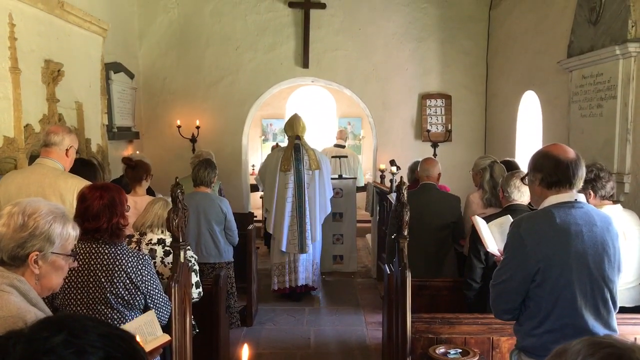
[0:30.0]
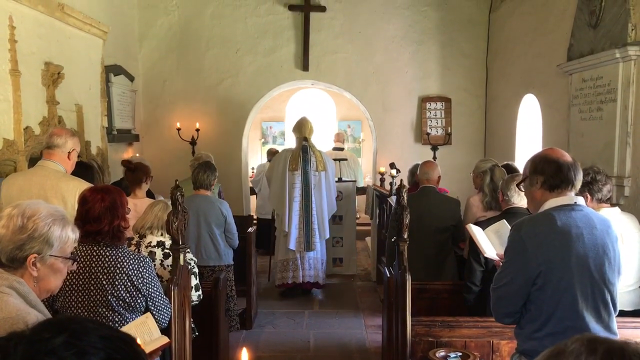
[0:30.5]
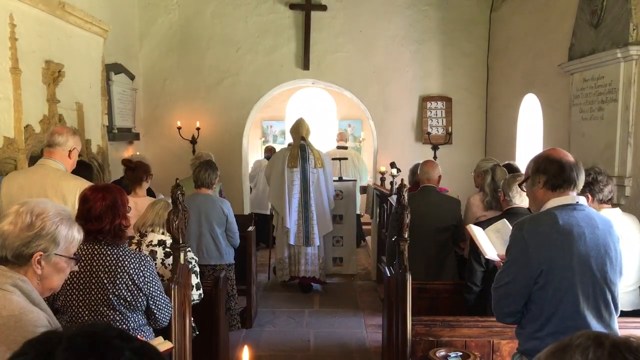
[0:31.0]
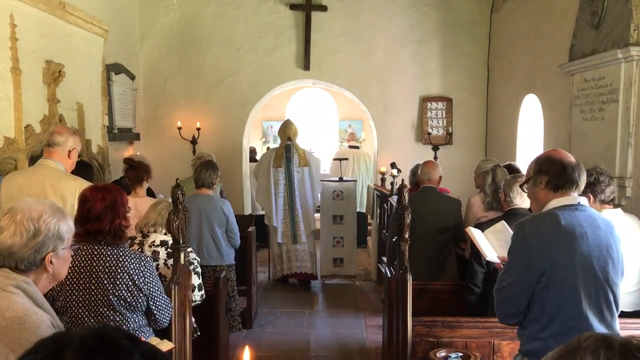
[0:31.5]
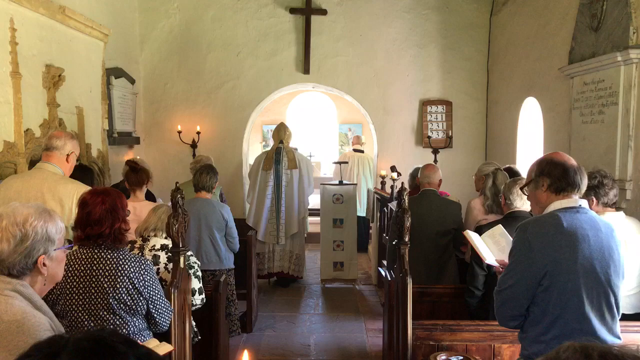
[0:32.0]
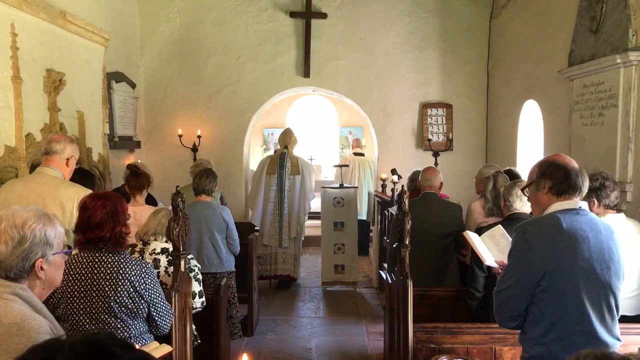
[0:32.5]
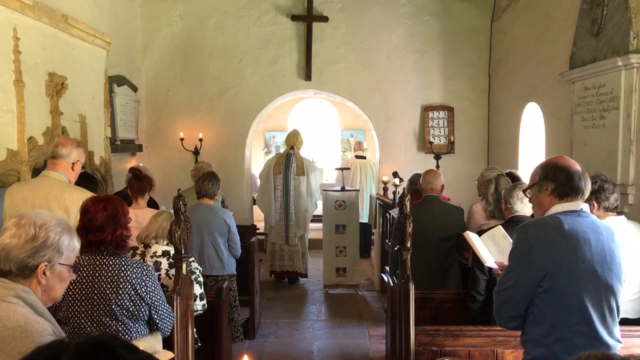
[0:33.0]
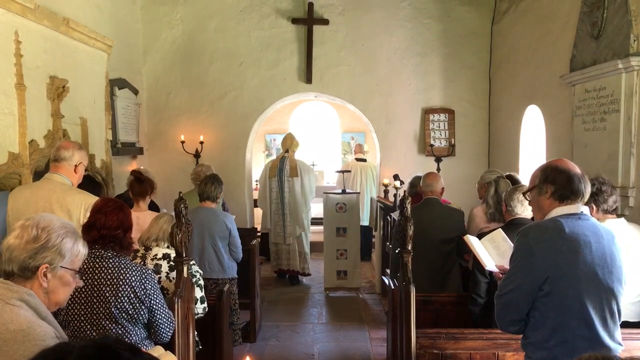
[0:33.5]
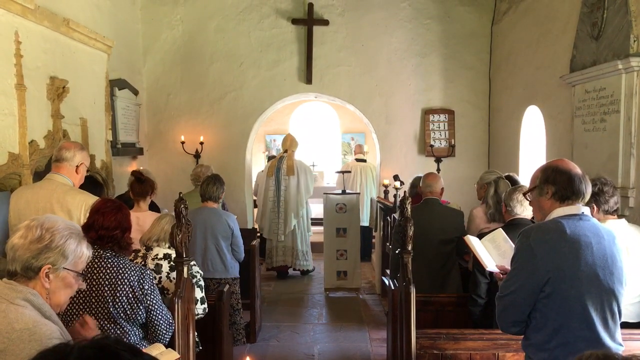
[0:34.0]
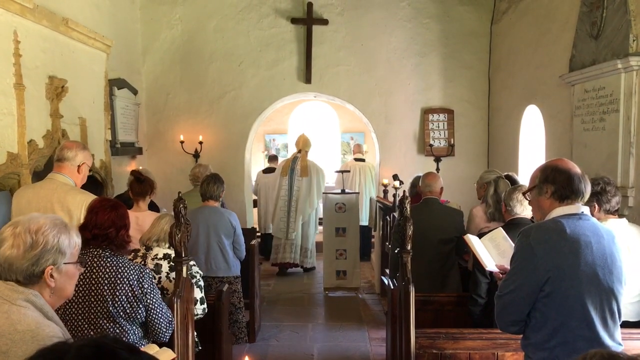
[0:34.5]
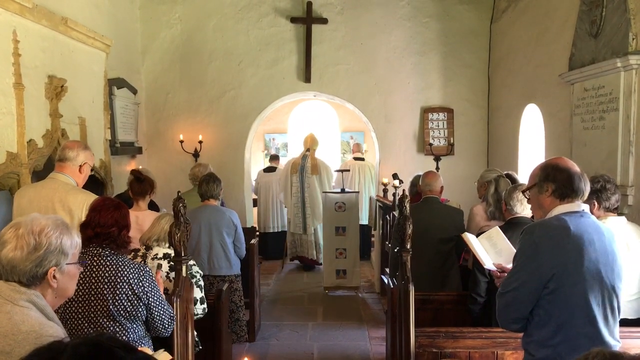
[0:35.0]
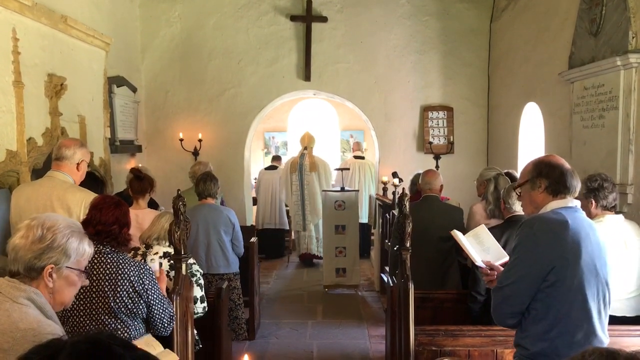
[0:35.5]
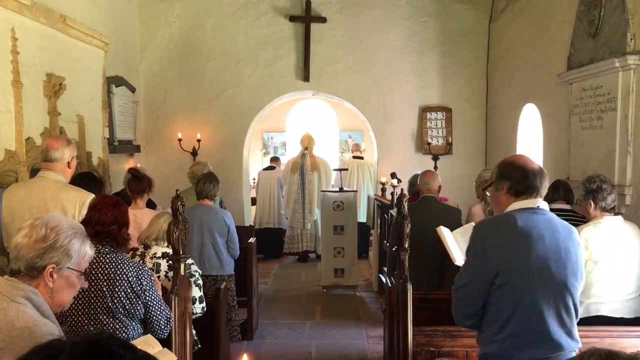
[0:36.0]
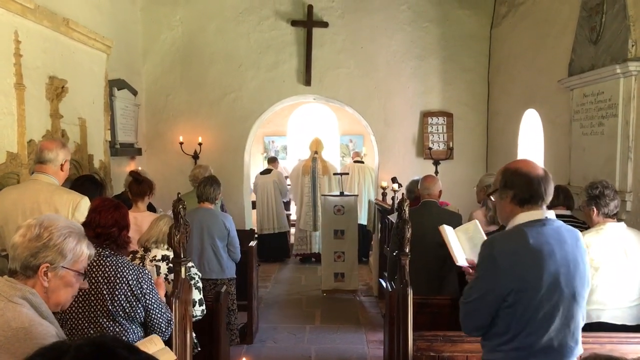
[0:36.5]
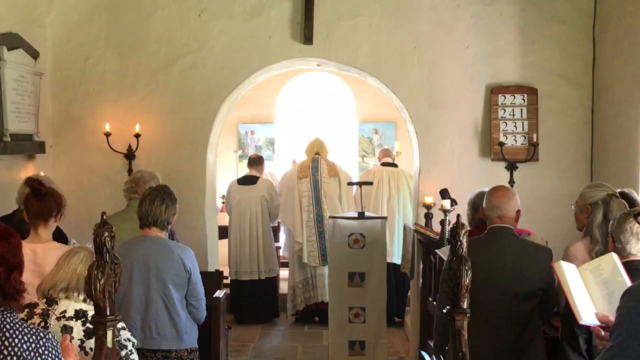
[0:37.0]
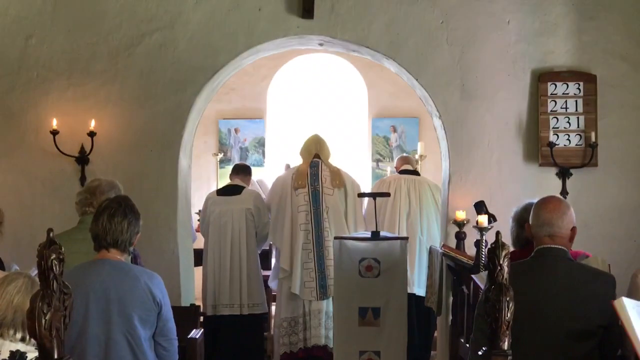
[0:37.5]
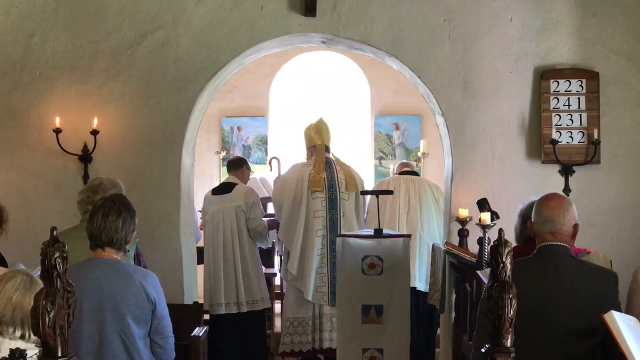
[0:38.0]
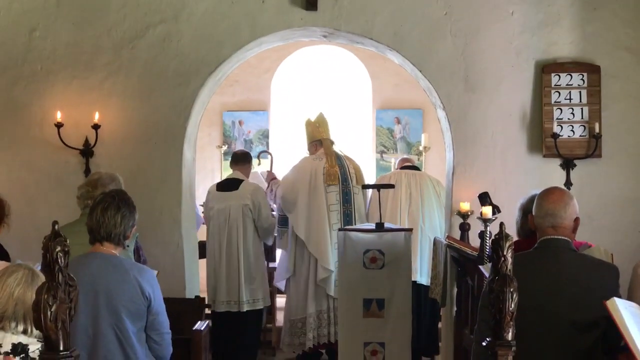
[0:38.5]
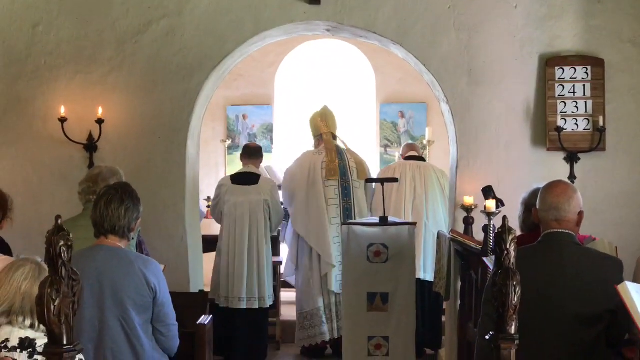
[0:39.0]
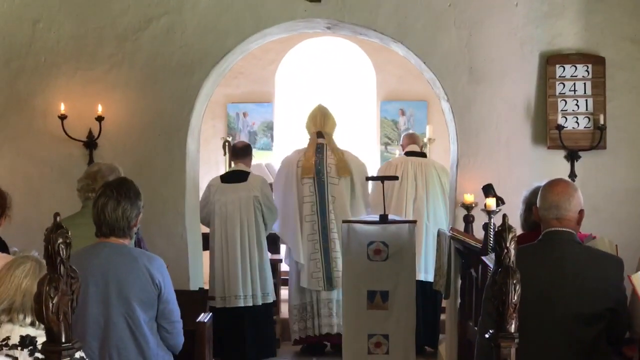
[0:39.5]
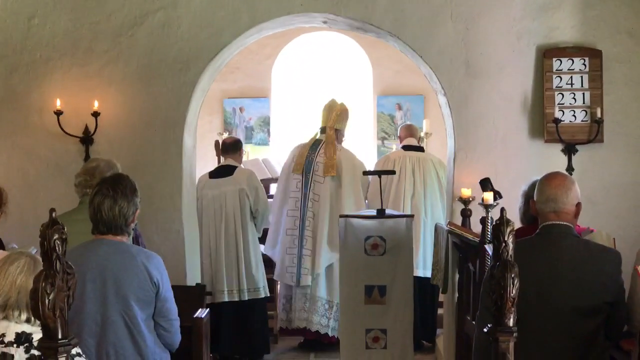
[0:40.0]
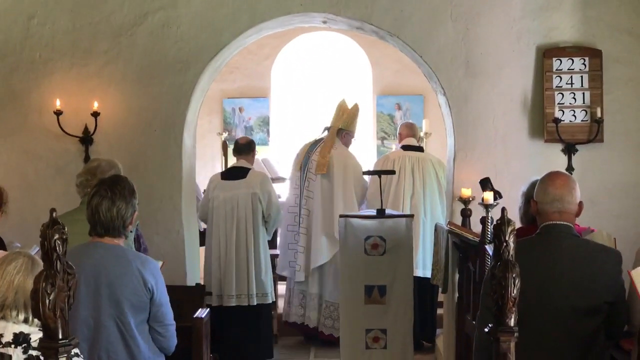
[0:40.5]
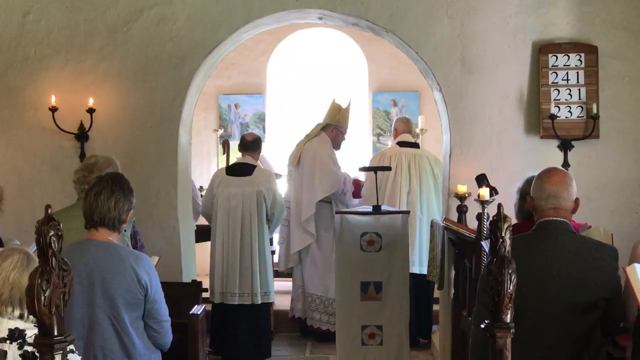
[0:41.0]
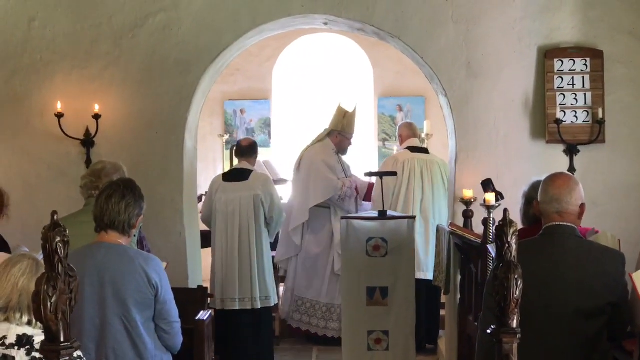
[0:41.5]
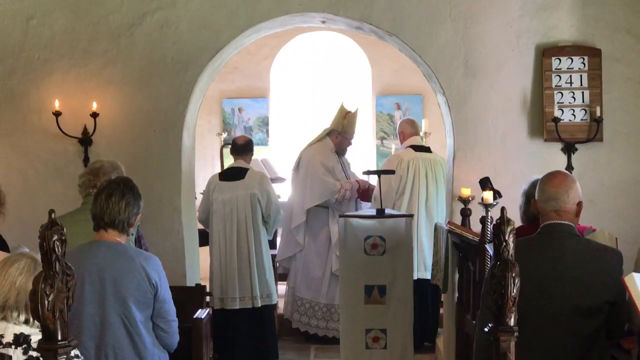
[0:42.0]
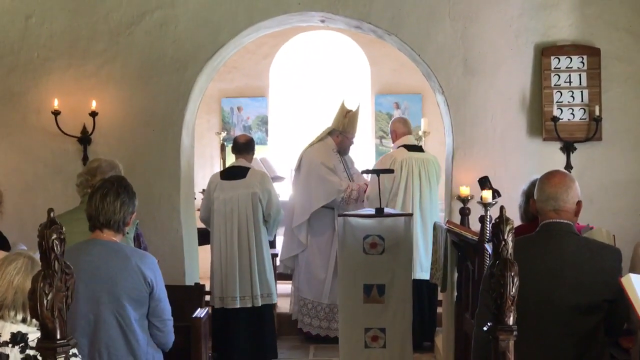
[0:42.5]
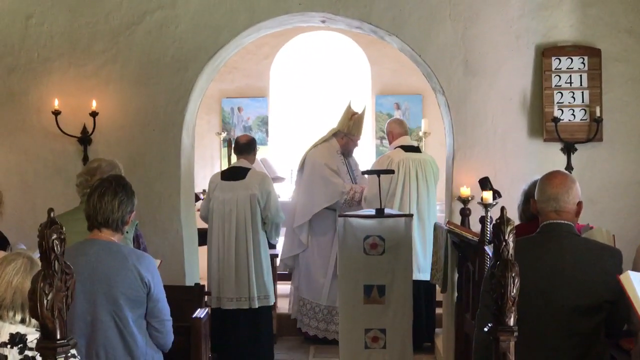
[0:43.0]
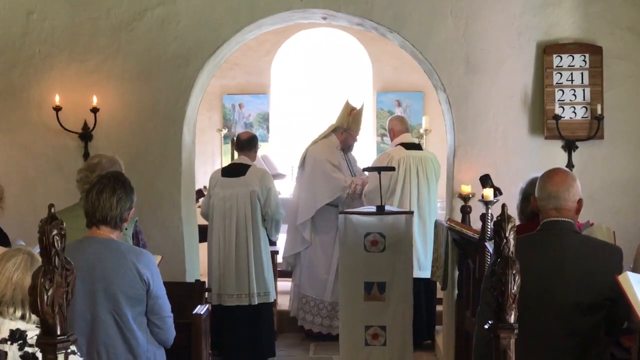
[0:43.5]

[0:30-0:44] All four of the men in robes have reached the front of the church and are still facing away from the camera for the most part. Near the end, the man with the golden hat starts turning towards the congregation, as if he is about to start the sermon. The members of the congregation are all in place, awaiting the sermon. There is a lectern with three or four symbols running along the centre of it. There are candles in the church, some of them on the wall: two candles on the wall are lit and two are not. The two unlit candles are in front of the hymn numbers. A wooden cross is at the top of the wall, and the apparent bishop and the other men in robes are under it.